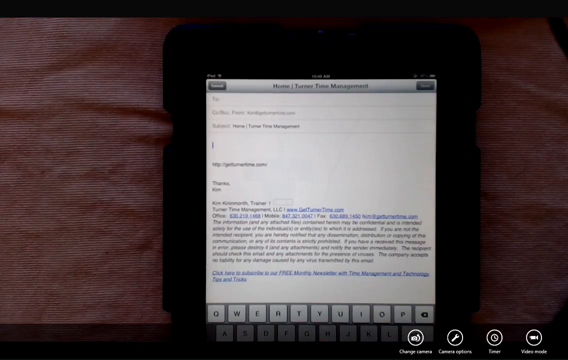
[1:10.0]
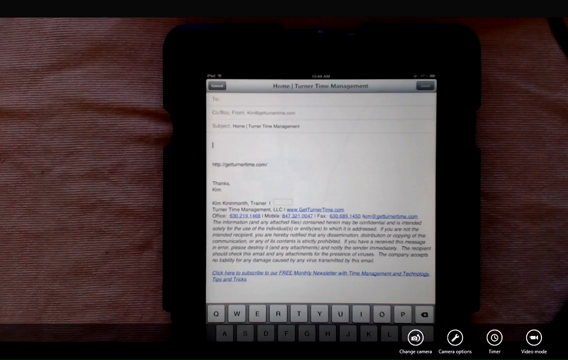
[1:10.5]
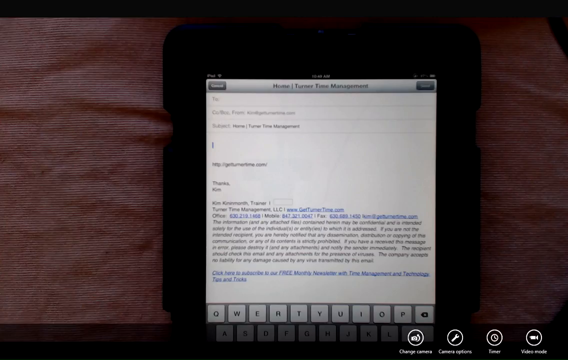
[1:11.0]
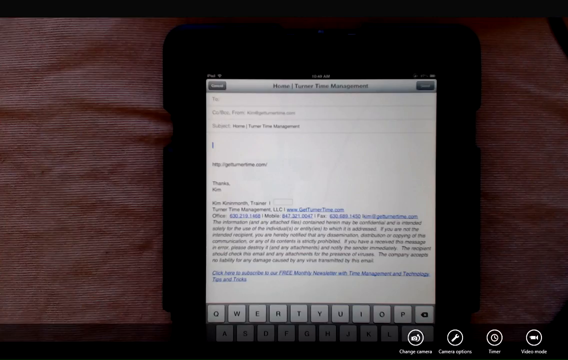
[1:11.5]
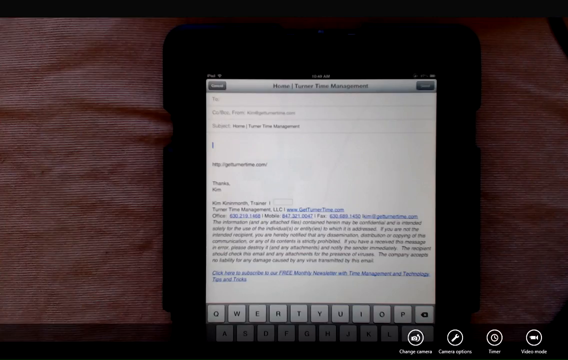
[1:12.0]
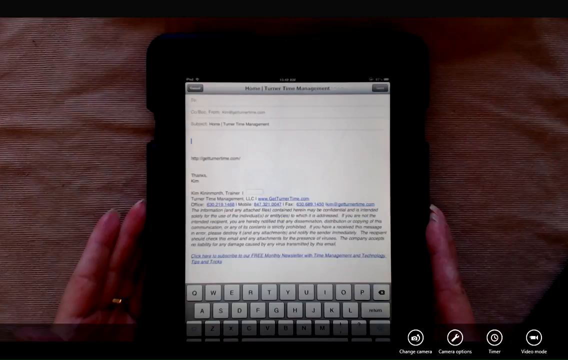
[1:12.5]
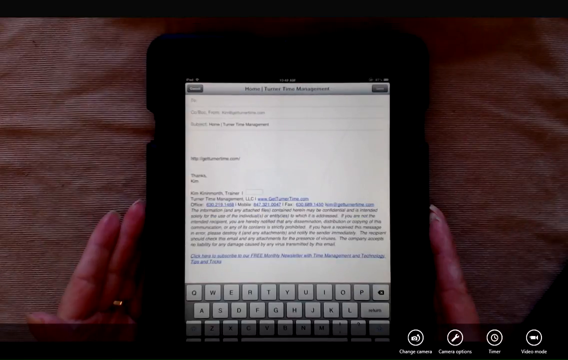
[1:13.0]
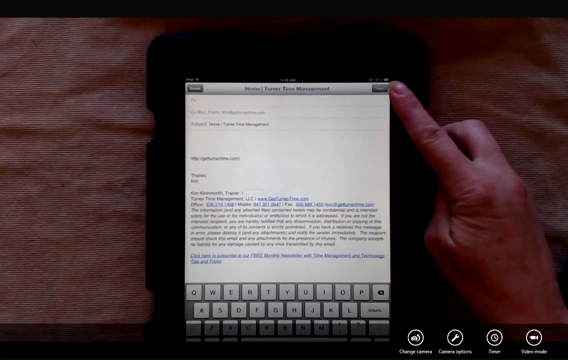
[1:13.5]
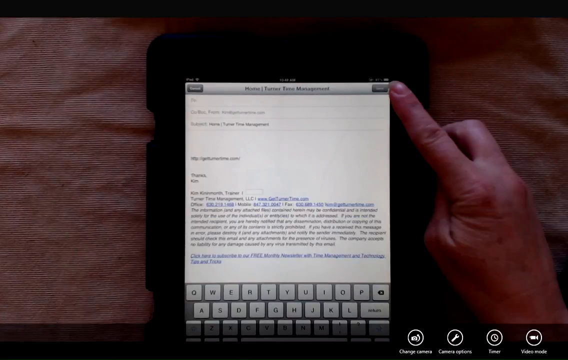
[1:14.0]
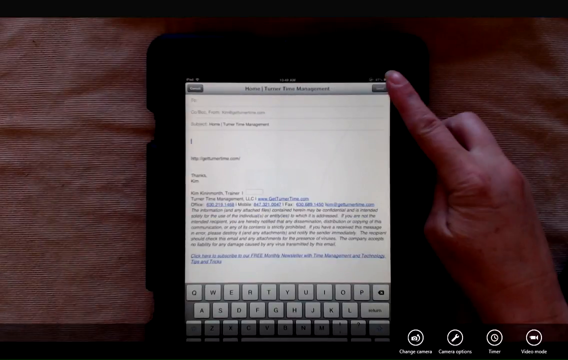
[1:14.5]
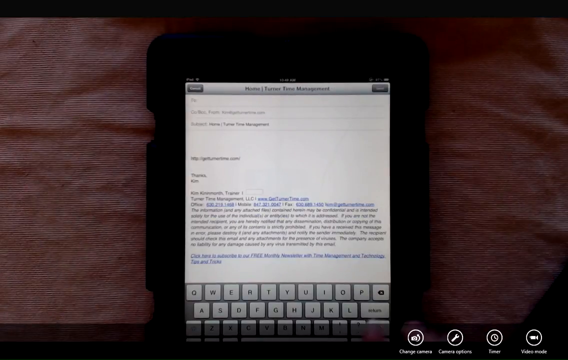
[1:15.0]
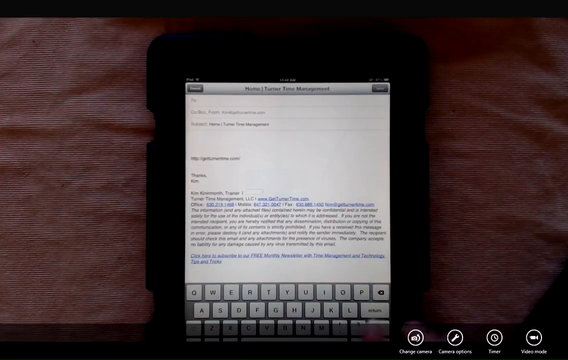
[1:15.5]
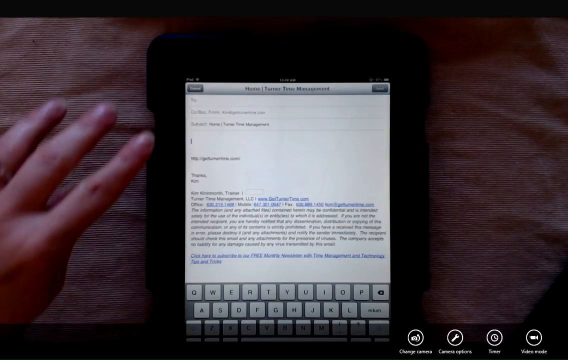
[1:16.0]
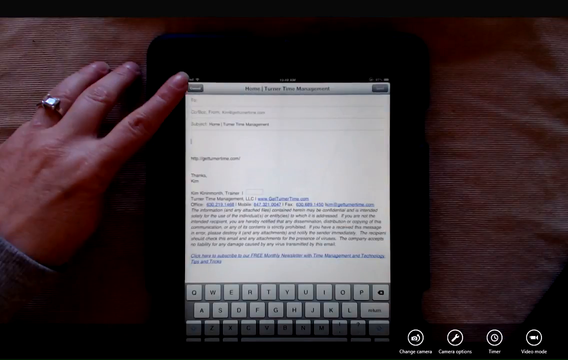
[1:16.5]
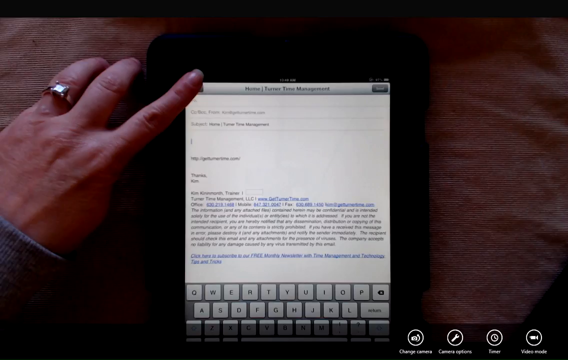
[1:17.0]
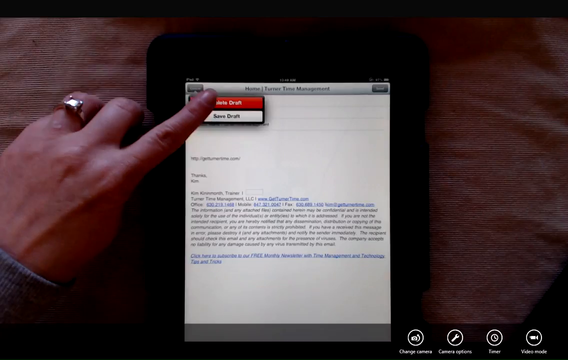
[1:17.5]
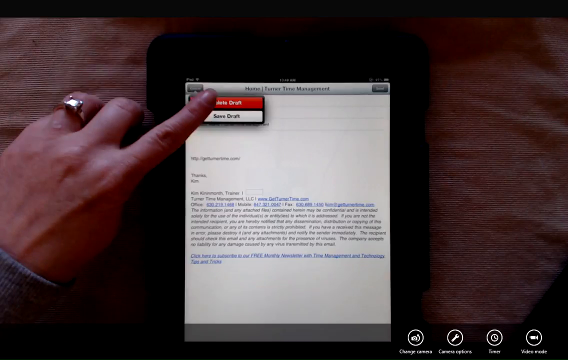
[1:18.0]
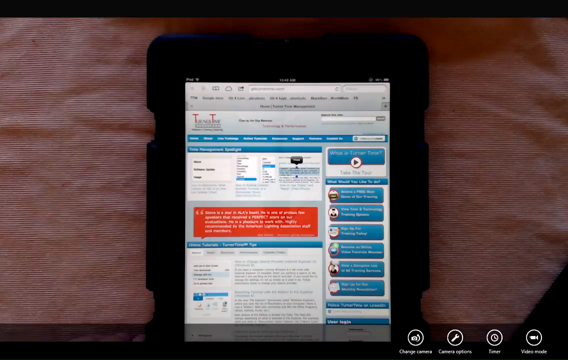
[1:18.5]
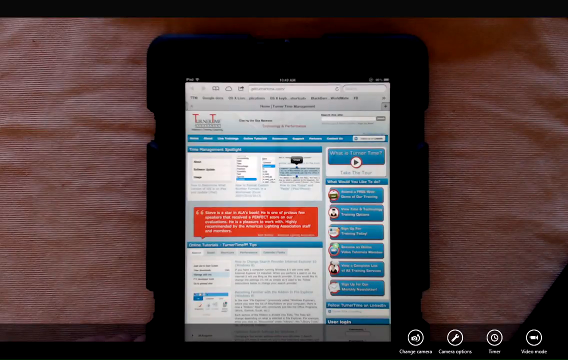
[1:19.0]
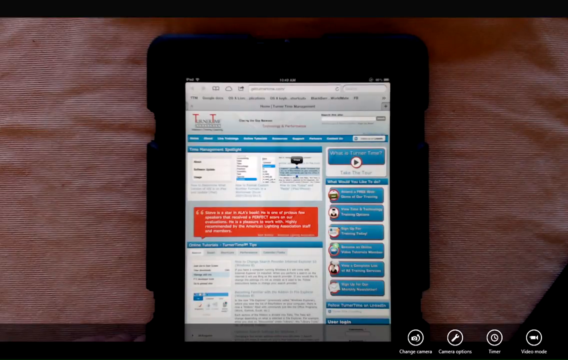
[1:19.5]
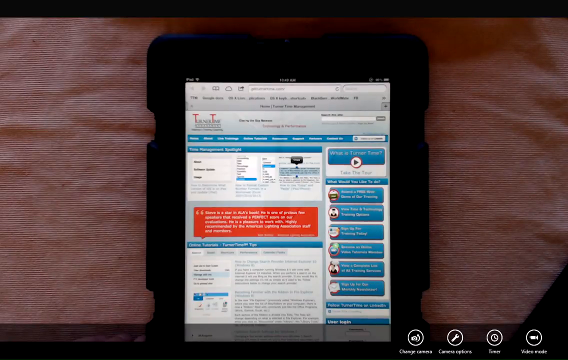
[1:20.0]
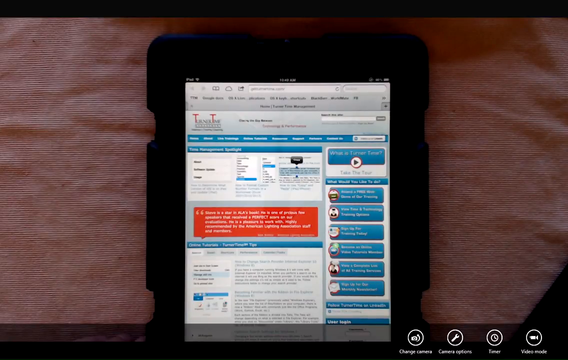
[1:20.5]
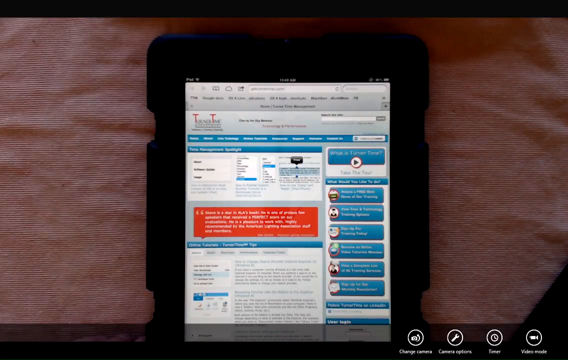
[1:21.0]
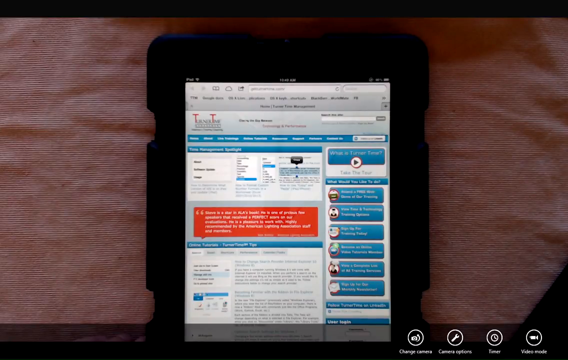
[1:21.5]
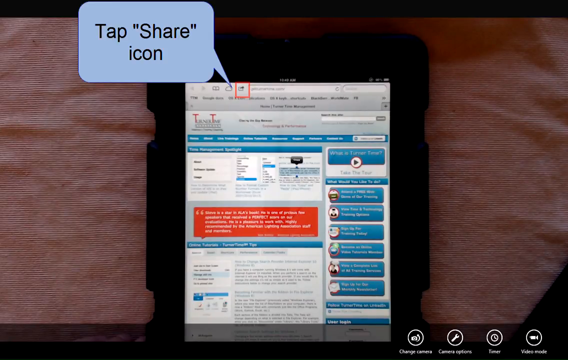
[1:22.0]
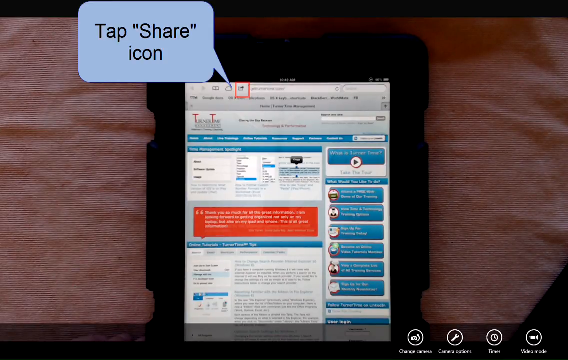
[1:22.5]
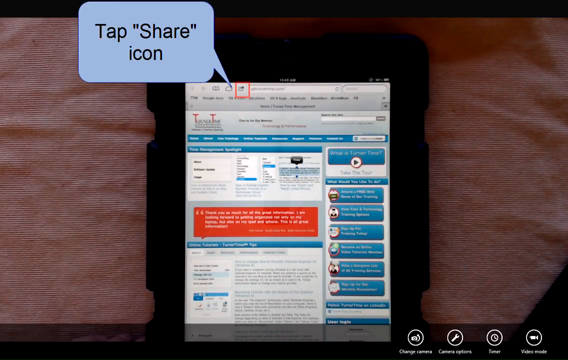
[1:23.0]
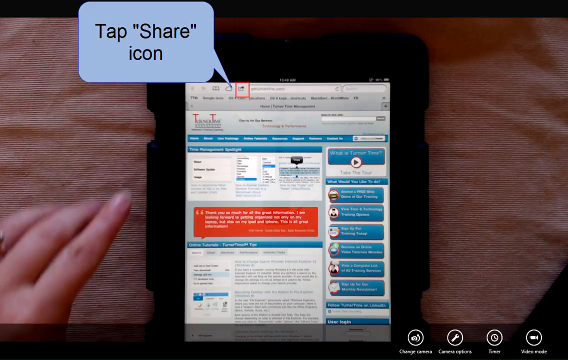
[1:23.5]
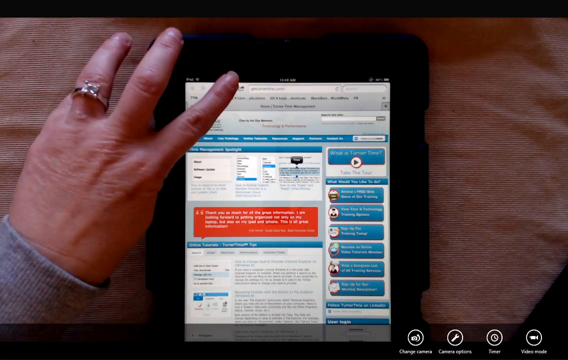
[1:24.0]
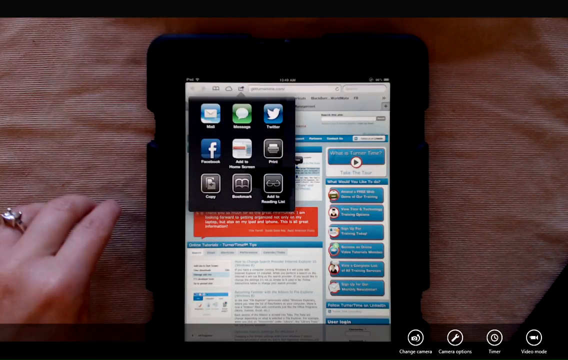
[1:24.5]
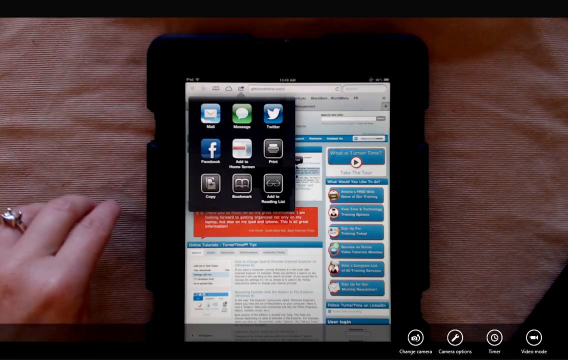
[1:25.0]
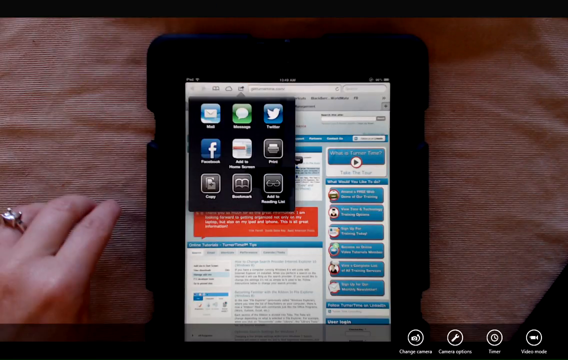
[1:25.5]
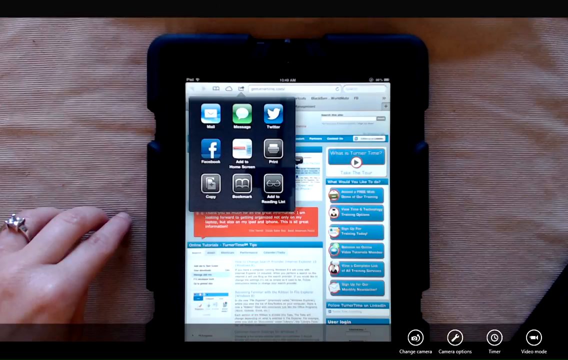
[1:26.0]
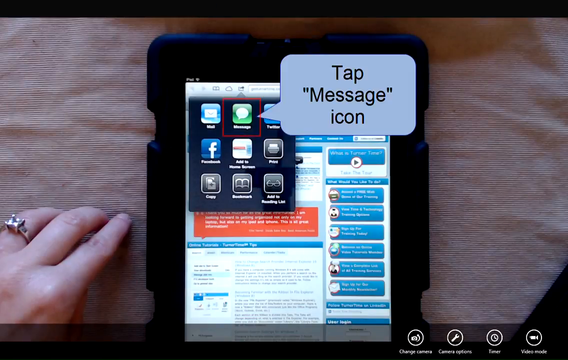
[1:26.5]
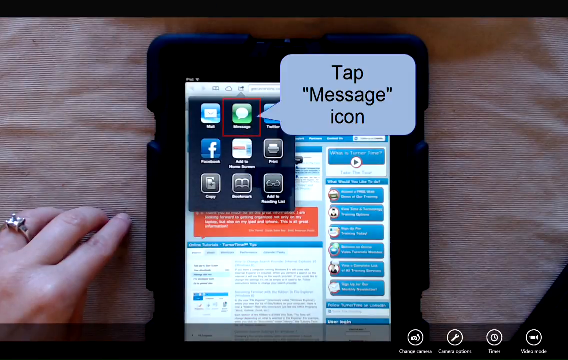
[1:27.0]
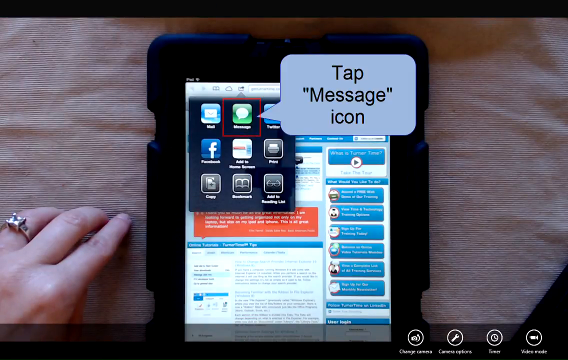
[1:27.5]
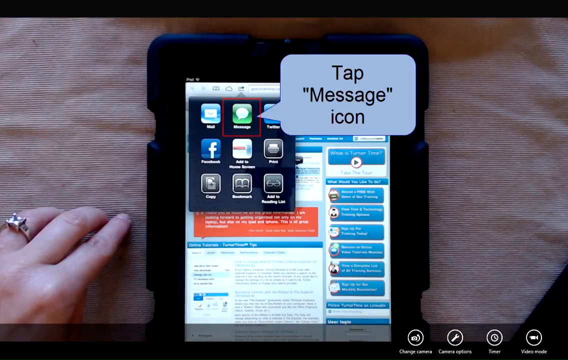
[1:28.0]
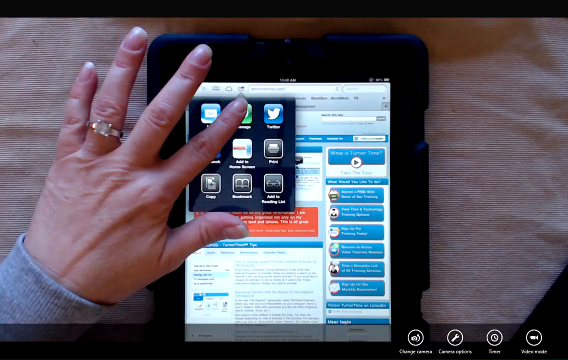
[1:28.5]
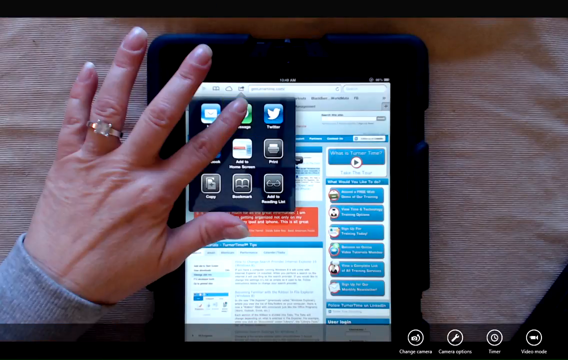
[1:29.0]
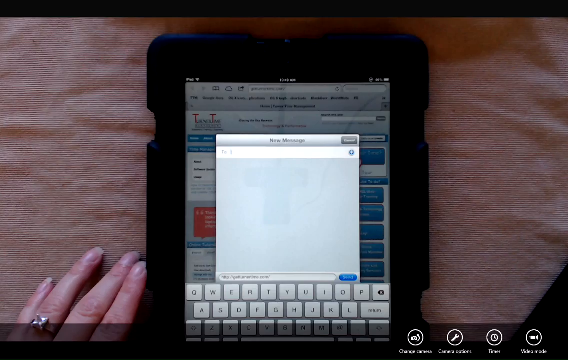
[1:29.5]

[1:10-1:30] The device rests on a light brown, tan colored fabric or cloth and is still at the very center of the screen. A small portion of the on-screen keyboard with a gray keypad is visible at the bottom of the device's screen, and the top portion is a white background with the email app open, showing the fields to enter text. A text cursor, a thin black vertical bar, is at the top section on the left. A pair of hands comes into view, one on each side of the device; the fingers grab the device and adjust it before both hands disappear. The right hand then appears on the right side, its index finger pointing towards the top right corner of the device and one of the on-screen buttons, hovering for a few seconds before disappearing.